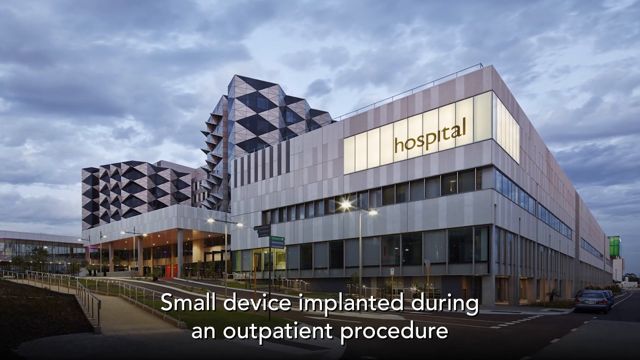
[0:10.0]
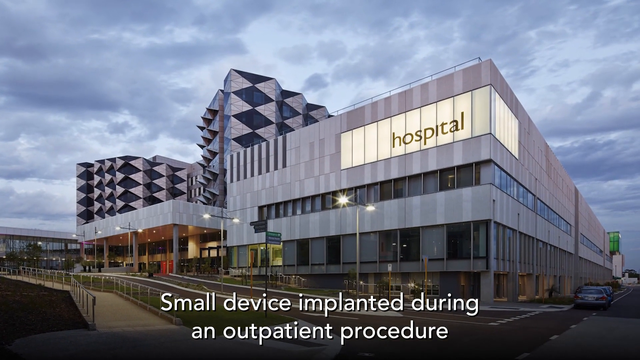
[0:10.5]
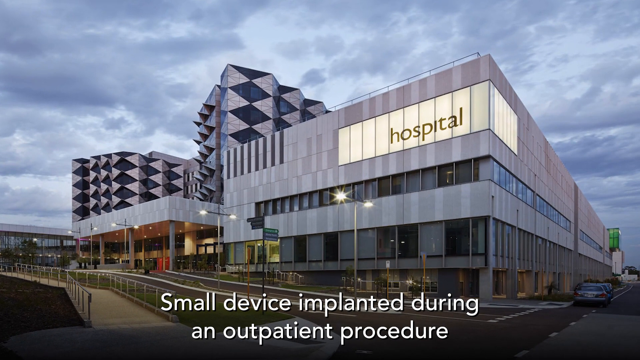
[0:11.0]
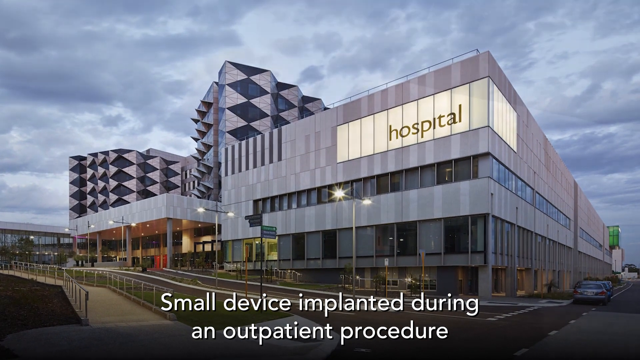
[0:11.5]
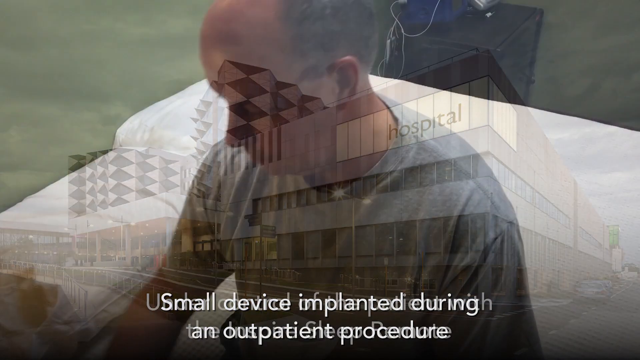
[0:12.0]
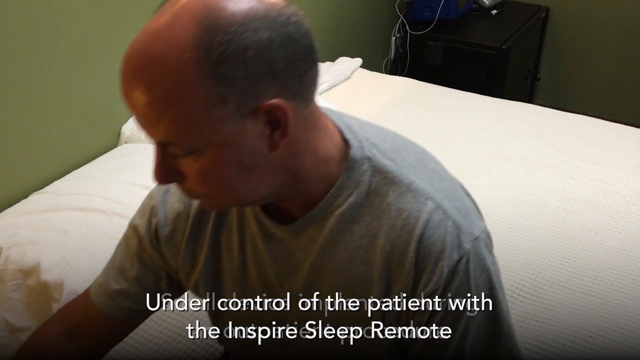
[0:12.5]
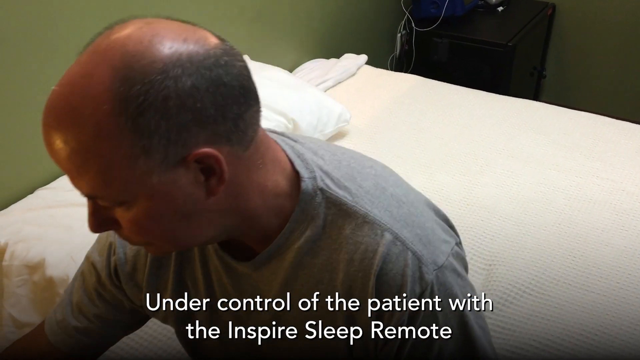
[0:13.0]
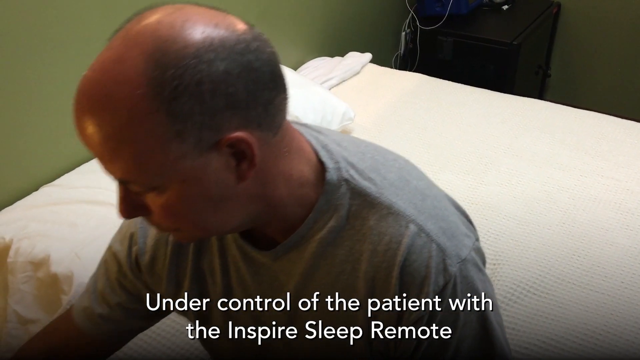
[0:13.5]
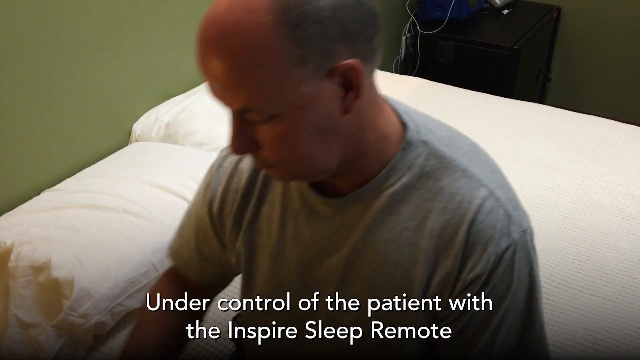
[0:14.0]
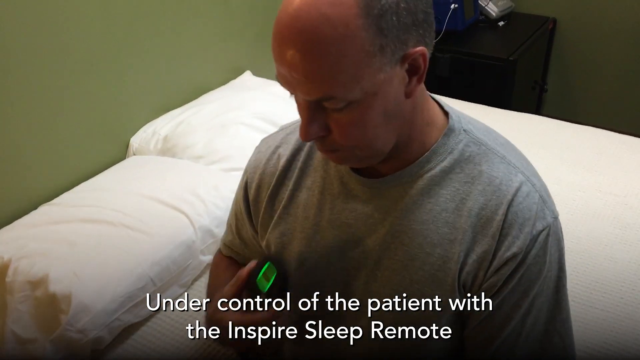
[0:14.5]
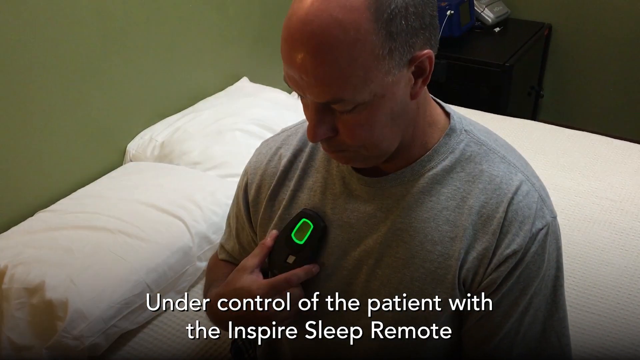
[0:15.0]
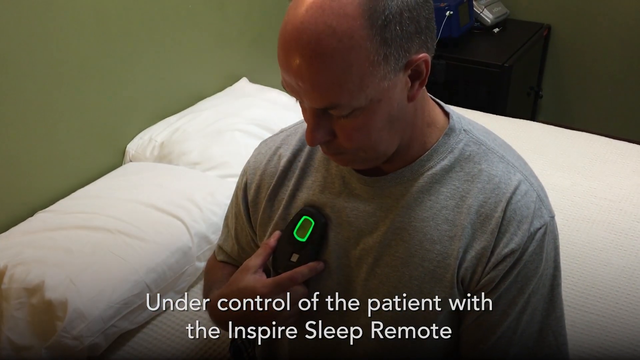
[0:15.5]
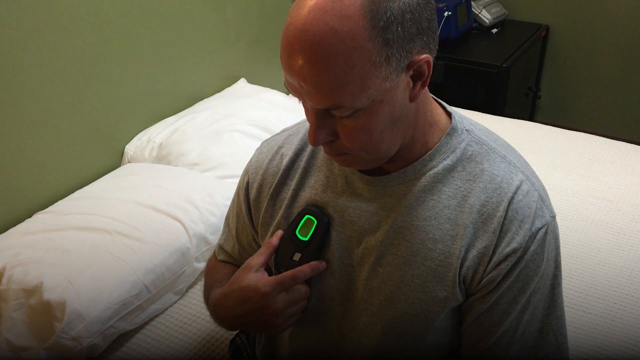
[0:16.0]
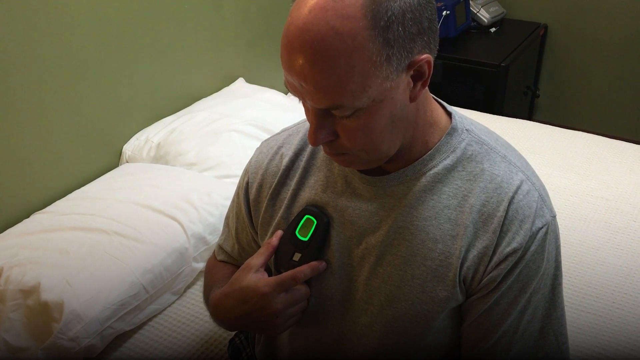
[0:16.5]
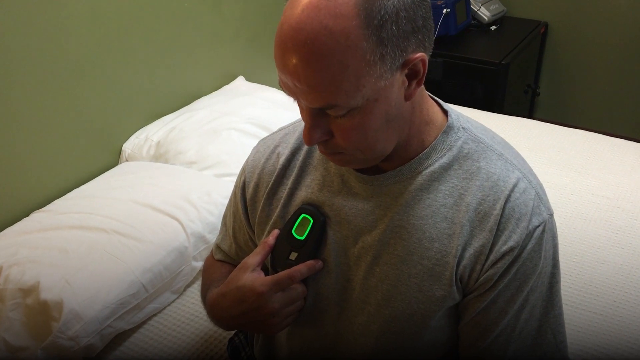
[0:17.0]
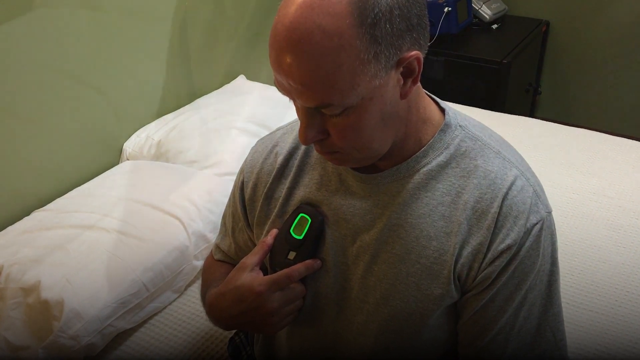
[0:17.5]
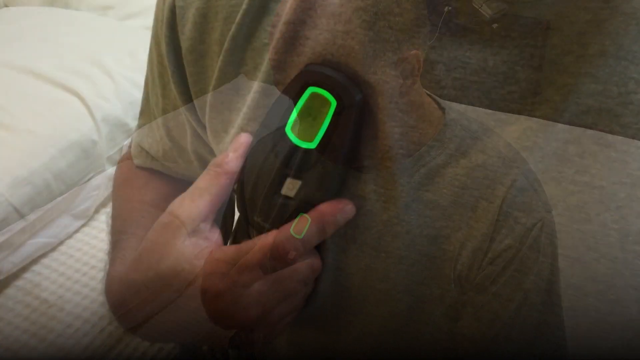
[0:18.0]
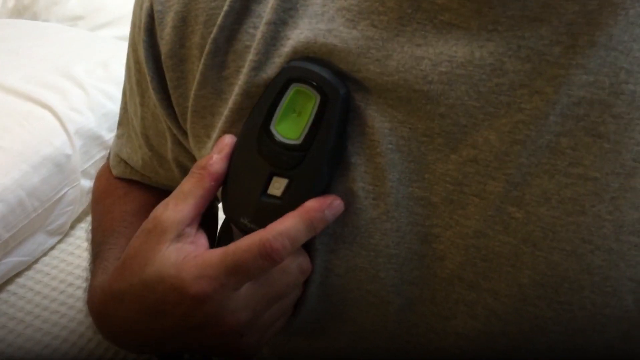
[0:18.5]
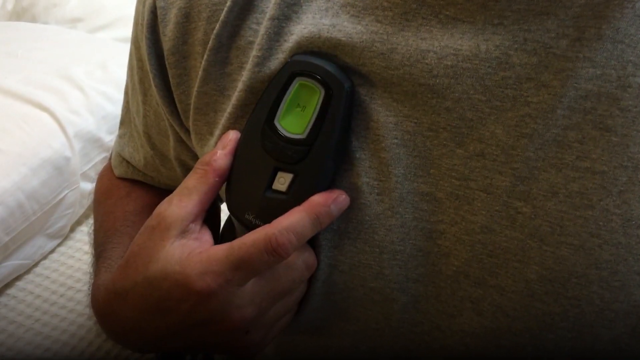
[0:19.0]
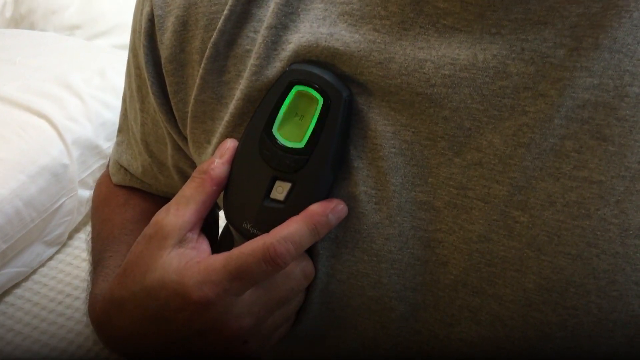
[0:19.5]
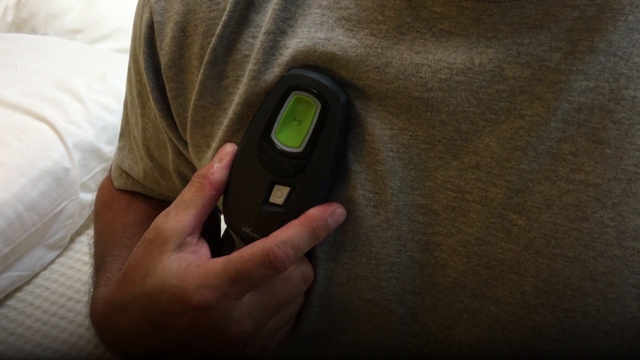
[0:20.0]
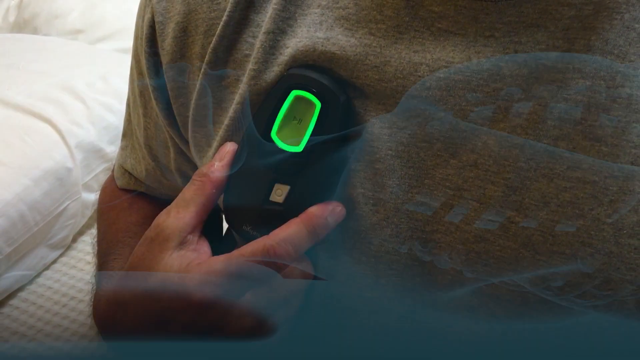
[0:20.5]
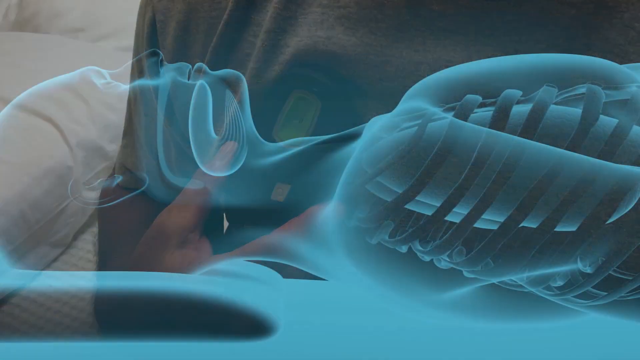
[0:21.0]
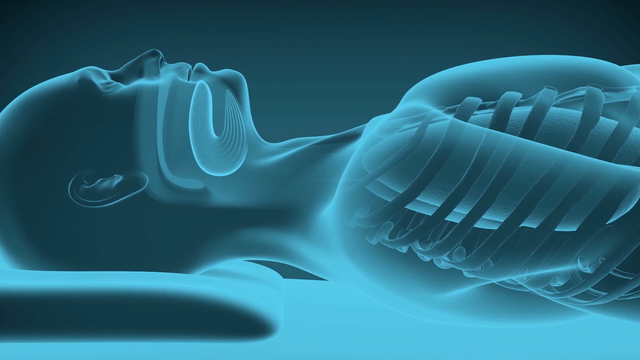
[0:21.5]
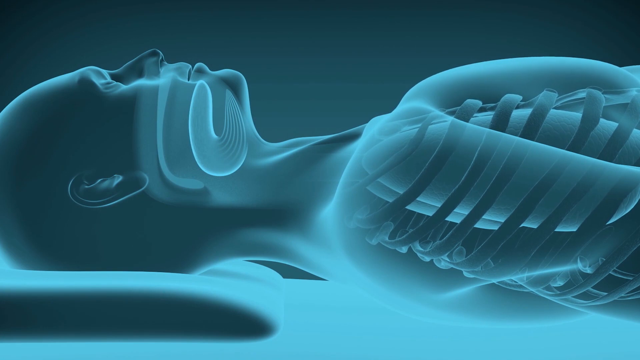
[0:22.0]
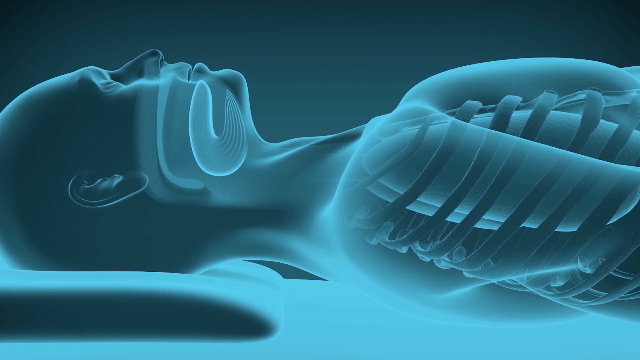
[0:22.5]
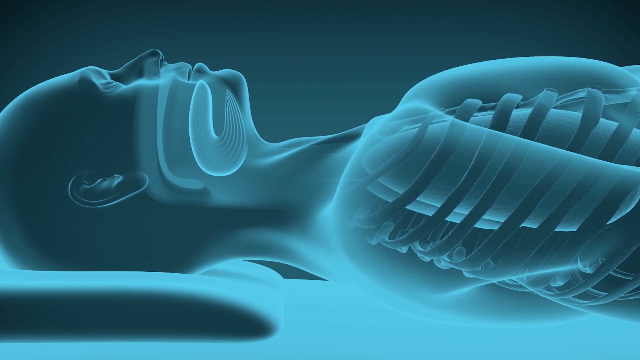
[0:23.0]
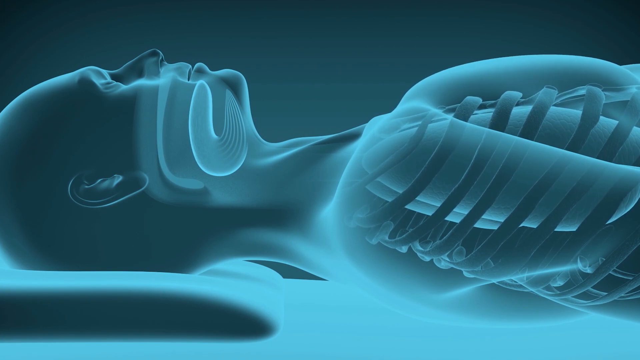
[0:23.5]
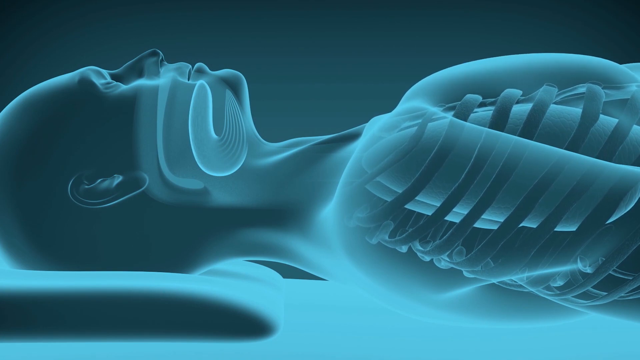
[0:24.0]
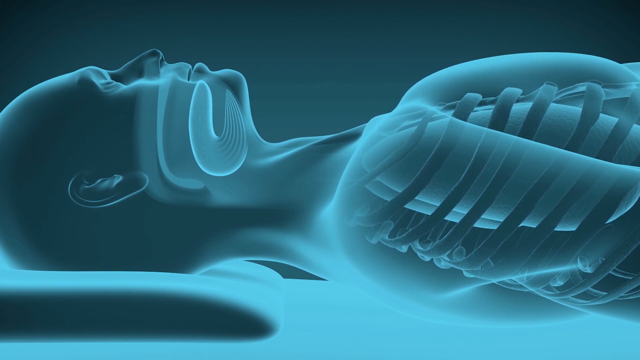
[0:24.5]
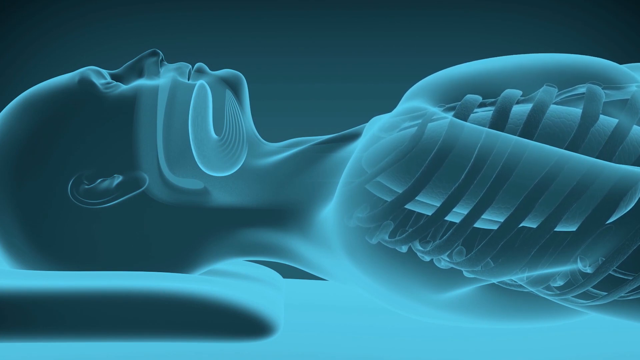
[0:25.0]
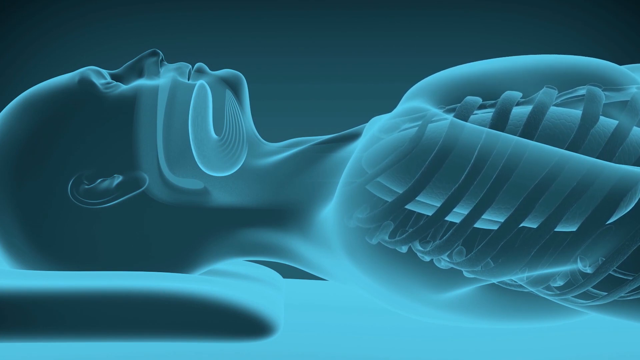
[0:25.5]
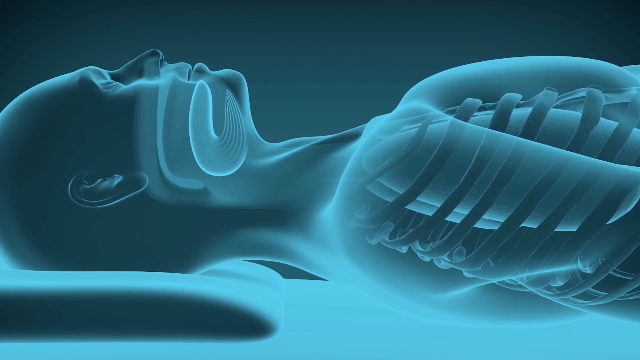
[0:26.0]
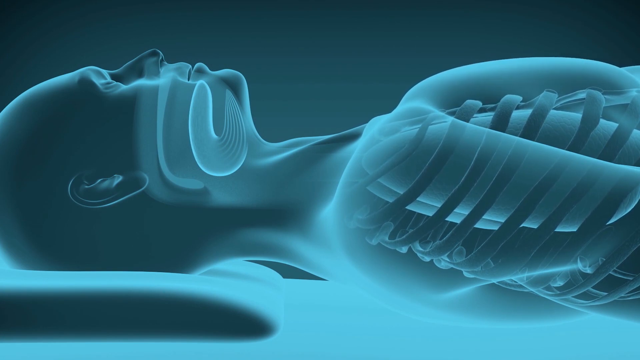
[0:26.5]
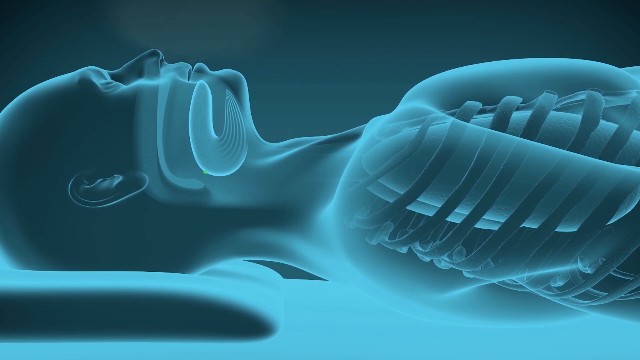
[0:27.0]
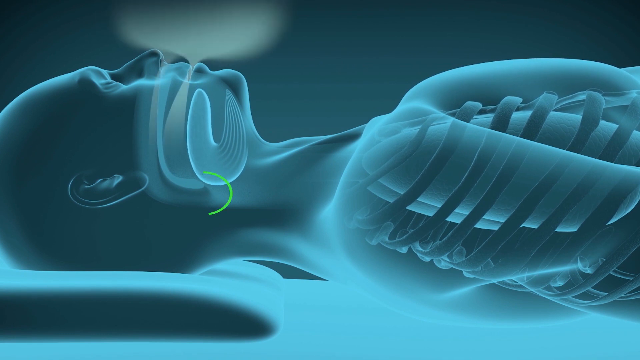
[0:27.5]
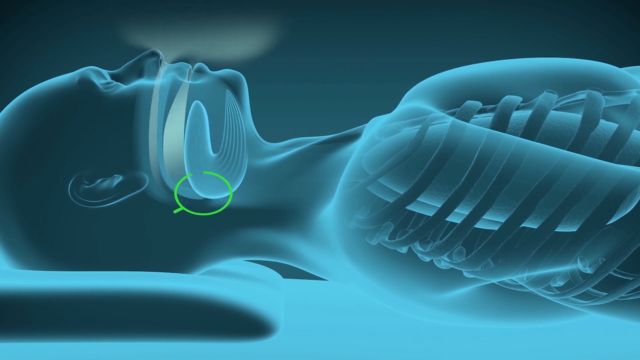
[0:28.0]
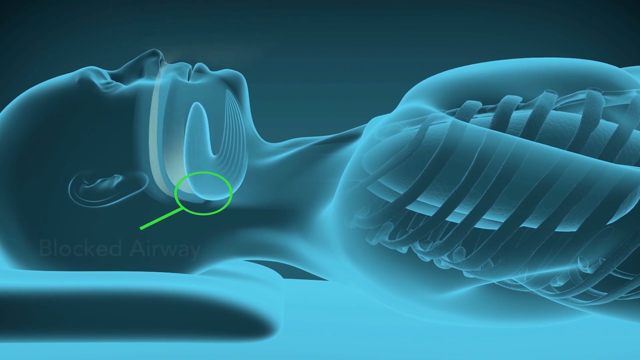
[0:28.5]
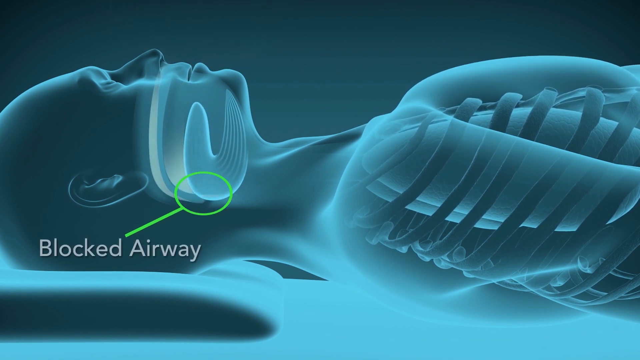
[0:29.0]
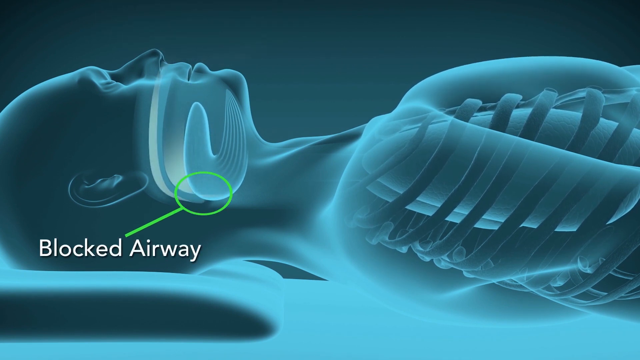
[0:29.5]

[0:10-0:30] The text at the bottom of the video reads "under control of the patient with the Inspire sleep remote." In the background, a video plays of a man who is balding at the top of his head, seemingly Caucasian, wearing a gray t-shirt. He is sitting on a bed with white sheets and white pillows, facing the camera. He reaches forward to something off-screen and grabs a hand-sized device with a green LED screen, which he places on his chest while watching it. The next shot is a close-up of the device flashing green. Then comes a rendering of the human body in which the ribs and the heart are visible and everything is blue. The figure looks like it is breathing, apparently simulating how air travels in the body when there is a blocked airway; a green circle circles where the airway would be blocked, and the impact is shown through the figure's rushed breathing.